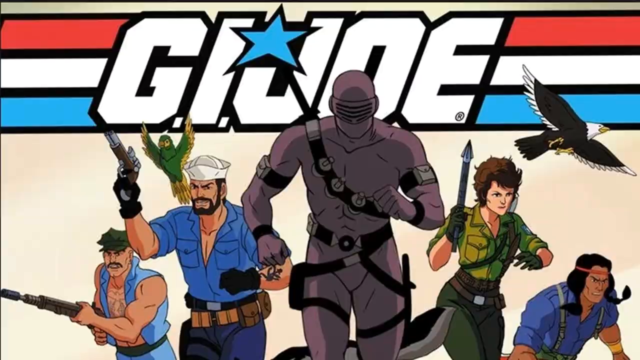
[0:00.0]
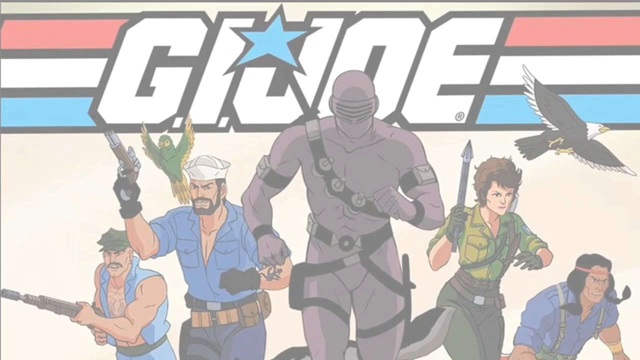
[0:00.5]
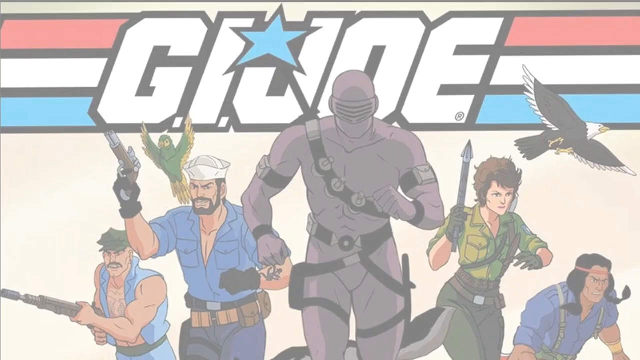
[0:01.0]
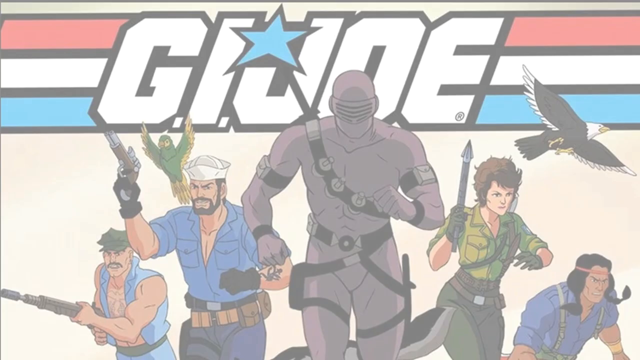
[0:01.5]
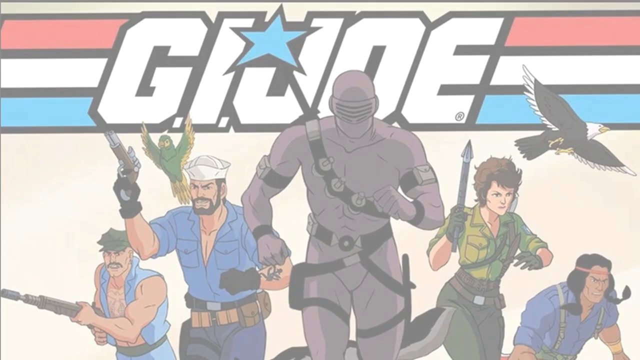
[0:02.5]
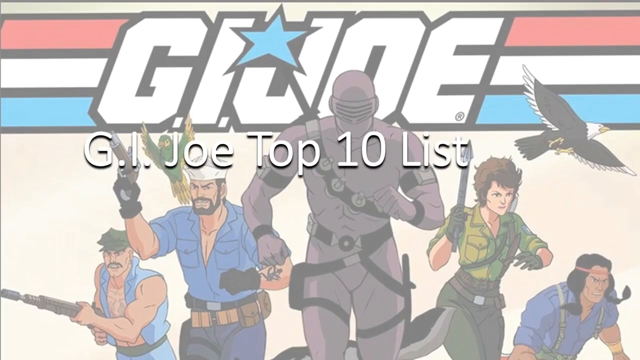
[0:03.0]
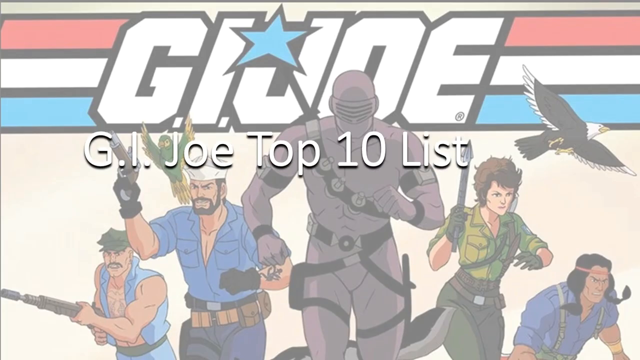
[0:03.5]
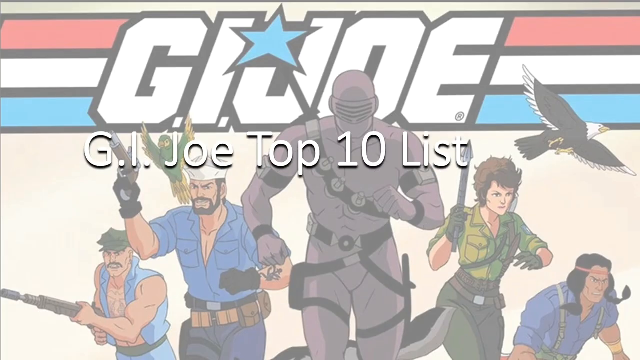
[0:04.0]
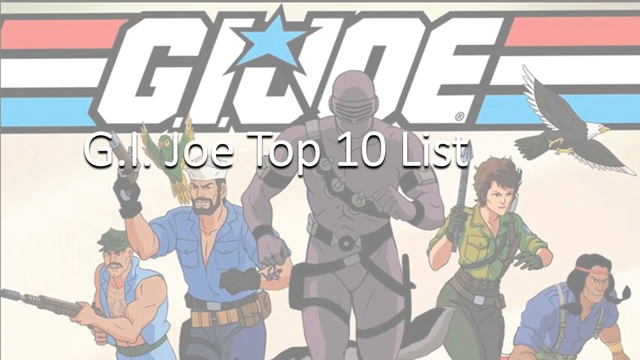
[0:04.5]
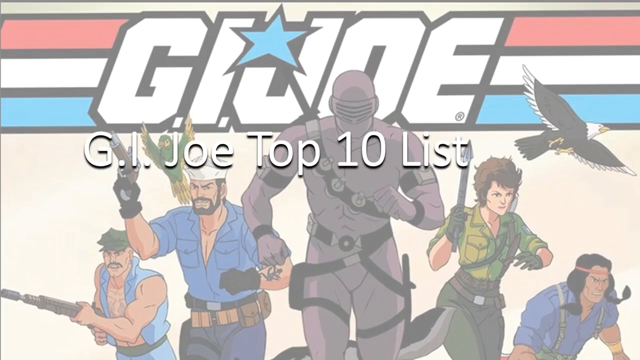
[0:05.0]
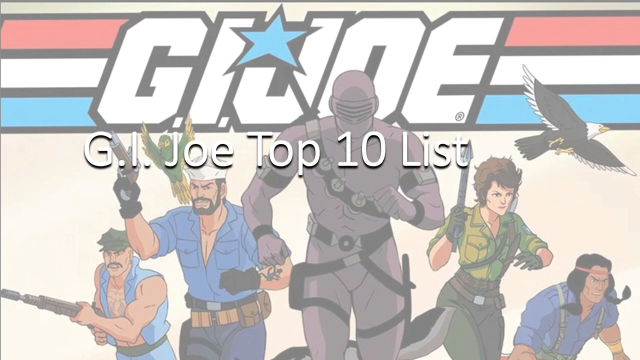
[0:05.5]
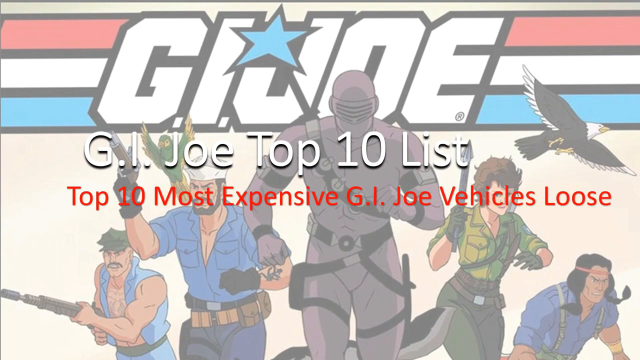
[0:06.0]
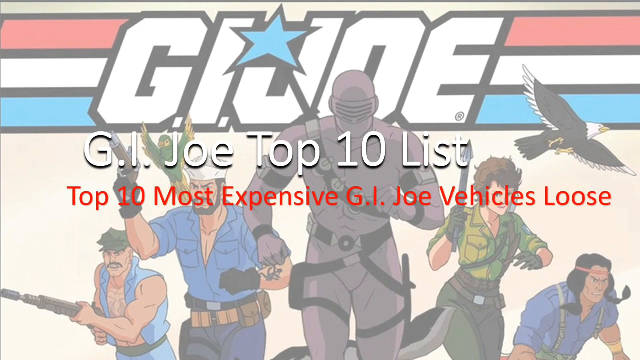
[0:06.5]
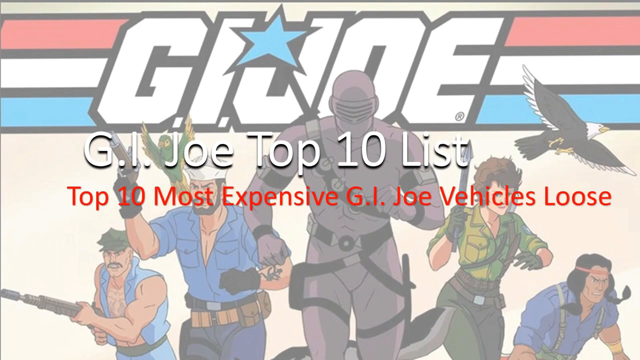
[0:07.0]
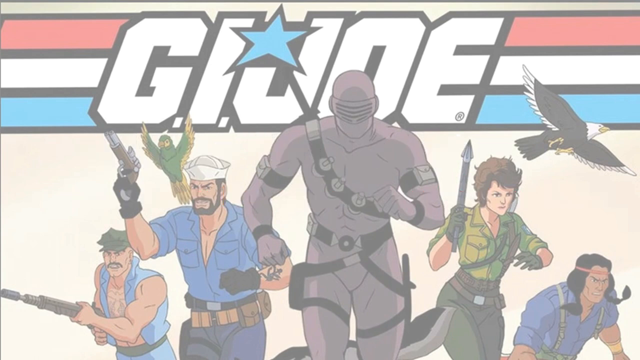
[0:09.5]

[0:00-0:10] In the background are the words G.I. Joe in a specific font. Between the I and the J there is a blue star with a black outline. A red line with a black outline runs across the top of the frame, with a white line with a black outline below it, and below that a light blue line with a black outline. In front of and below the light blue line is an illustration of a hawk flying toward the right side of the screen. Below the G and the I there is a green and yellow parrot. Five people are also visible: the center figure wears a suit that covers his body so that not an inch of skin shows; there are three more men, one of them seemingly Native American; two of the people have guns in their hands; and one woman in a green shirt holds some kind of harpoon or something similar, standing in a pose. A white transparent font then appears over the whole screen, and a title about the G.I. Joe top 10 list of the most expensive loose vehicles appears in red letters, followed by some rules.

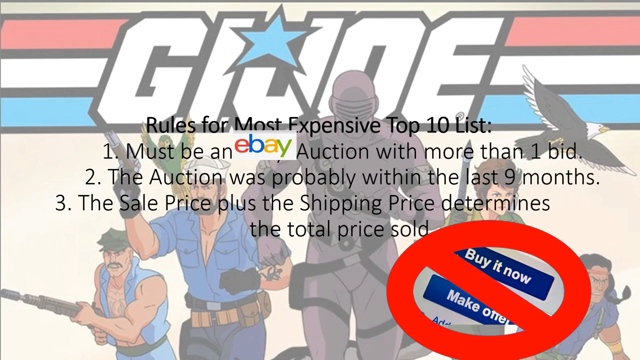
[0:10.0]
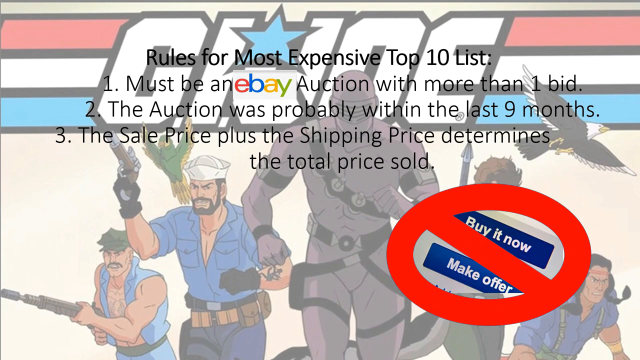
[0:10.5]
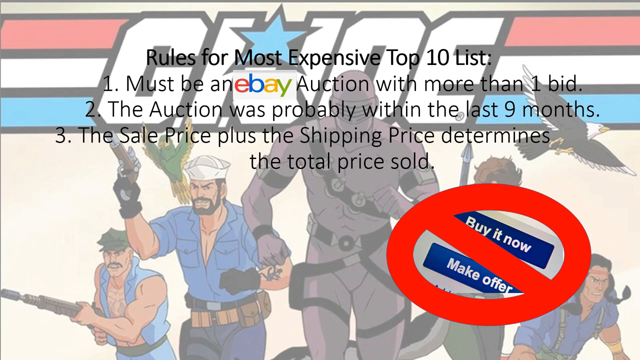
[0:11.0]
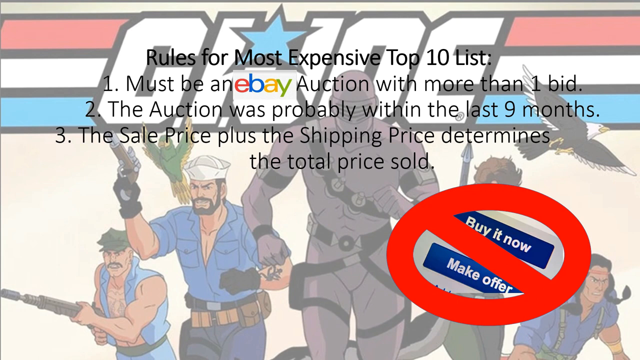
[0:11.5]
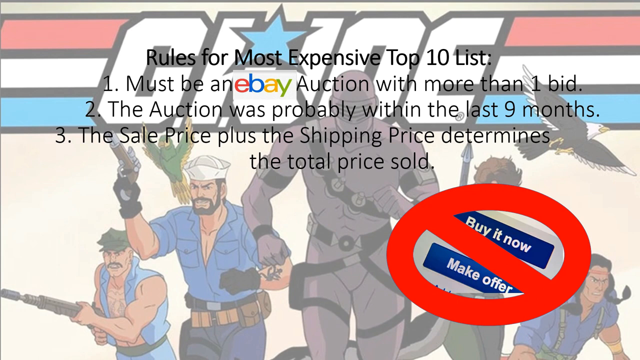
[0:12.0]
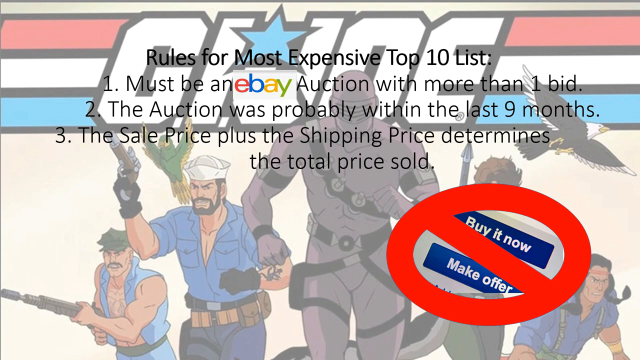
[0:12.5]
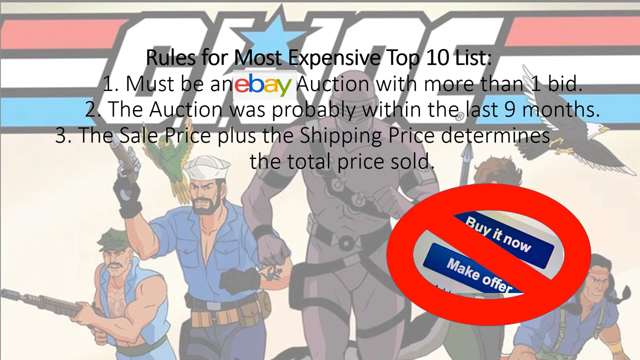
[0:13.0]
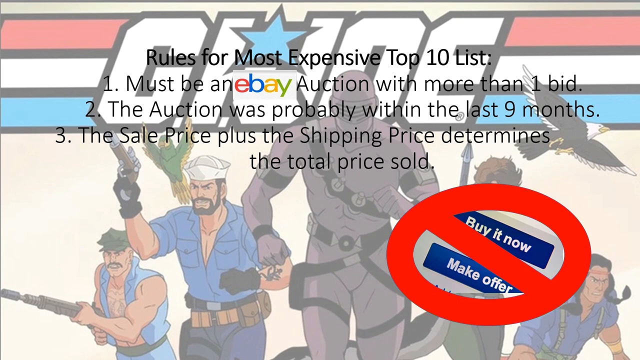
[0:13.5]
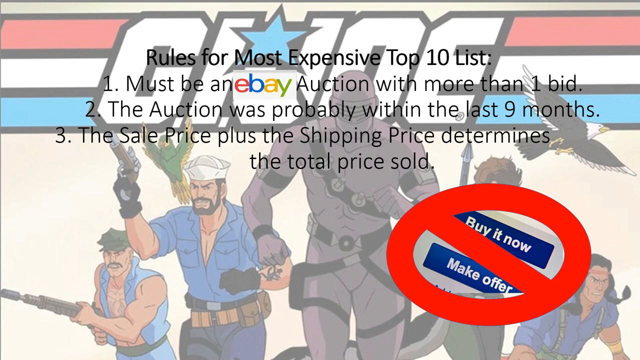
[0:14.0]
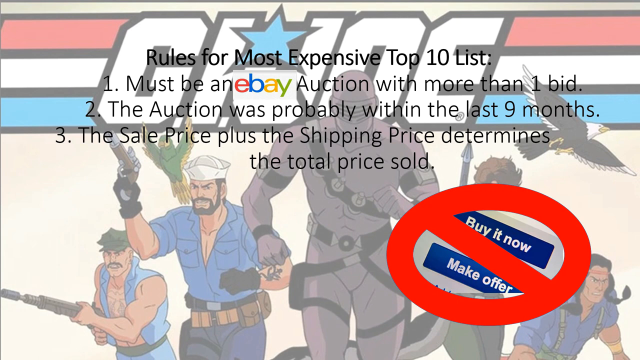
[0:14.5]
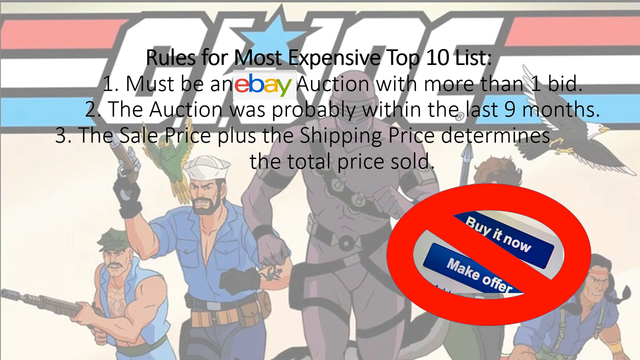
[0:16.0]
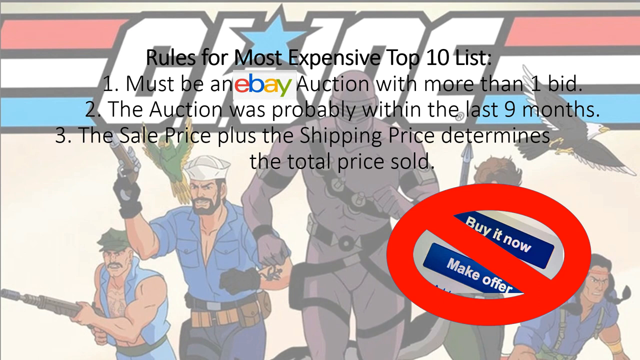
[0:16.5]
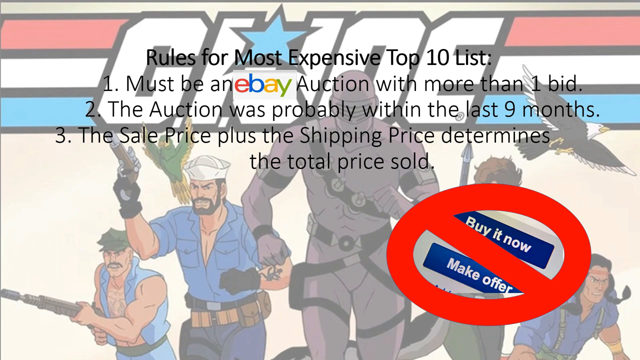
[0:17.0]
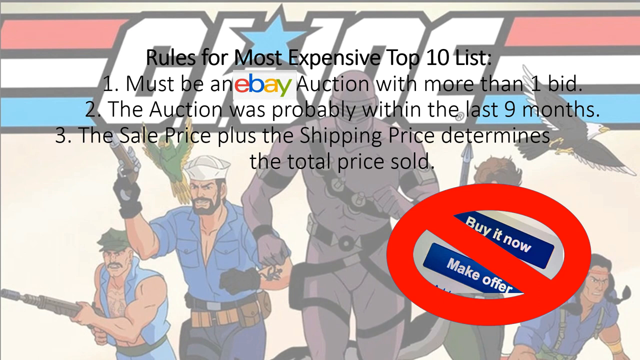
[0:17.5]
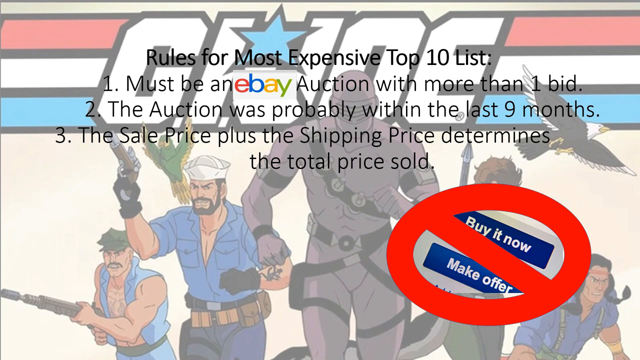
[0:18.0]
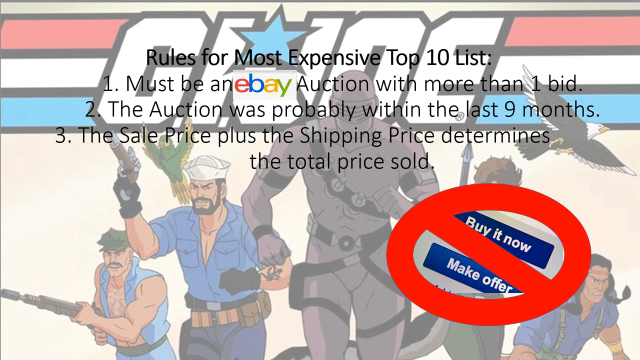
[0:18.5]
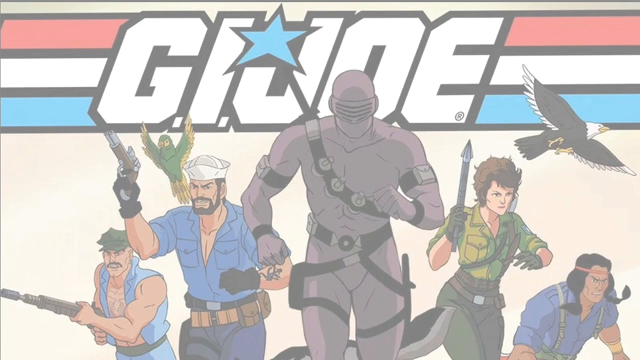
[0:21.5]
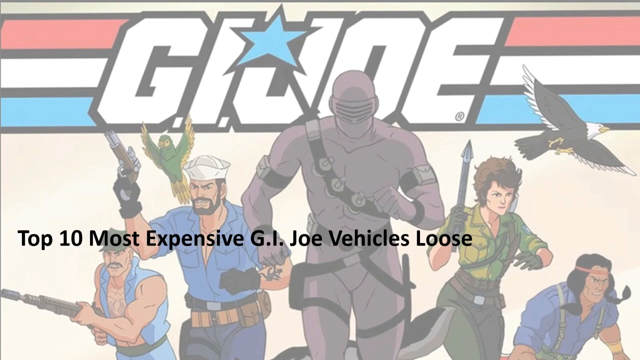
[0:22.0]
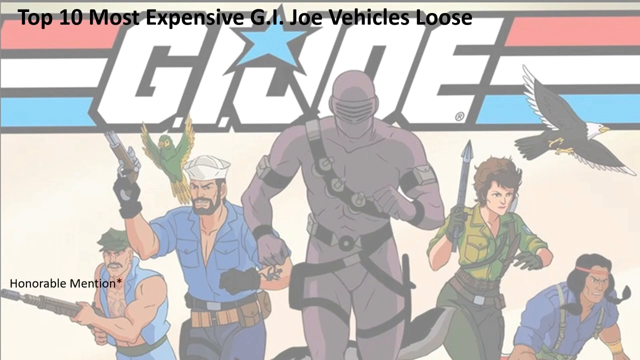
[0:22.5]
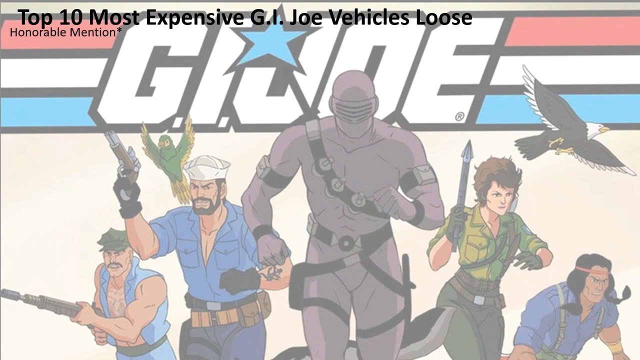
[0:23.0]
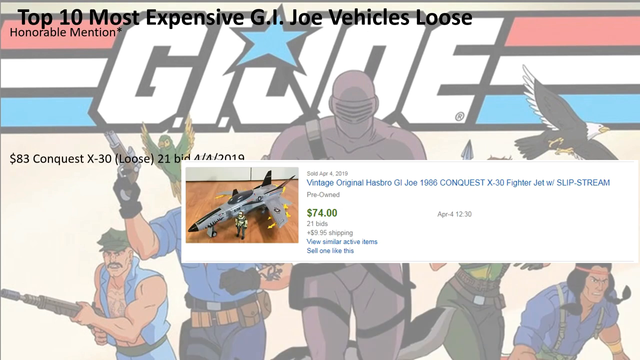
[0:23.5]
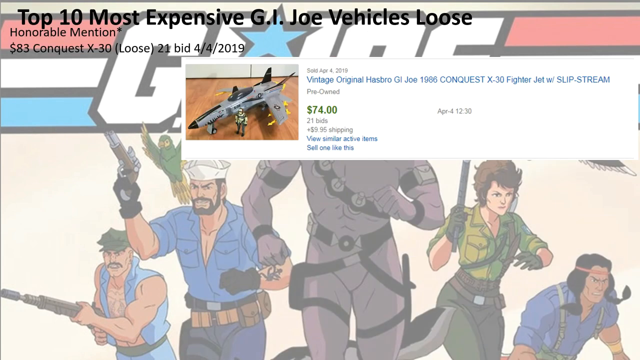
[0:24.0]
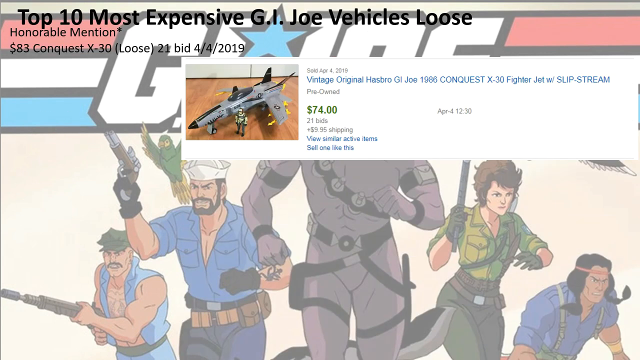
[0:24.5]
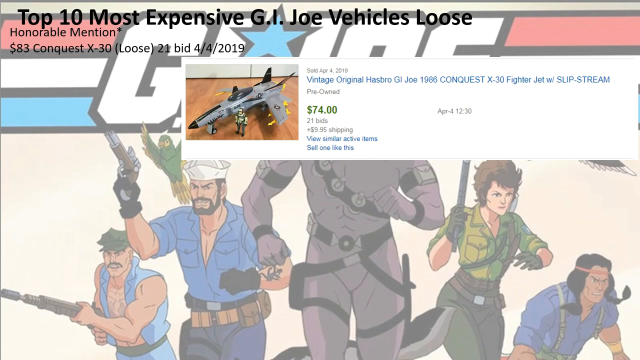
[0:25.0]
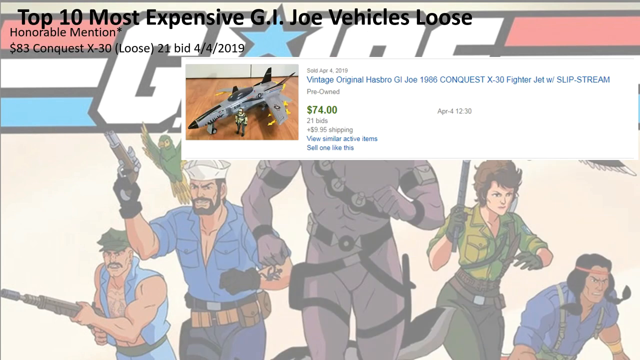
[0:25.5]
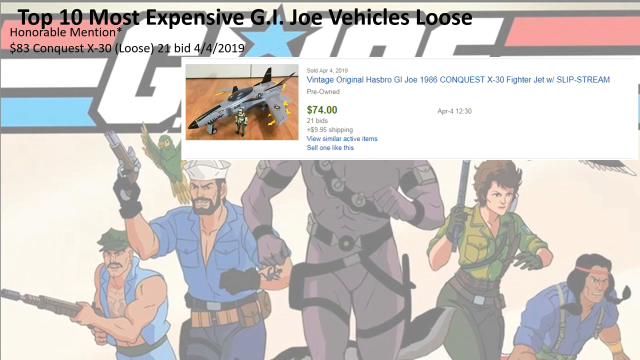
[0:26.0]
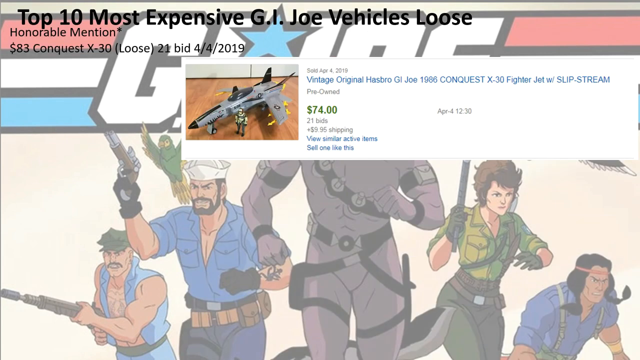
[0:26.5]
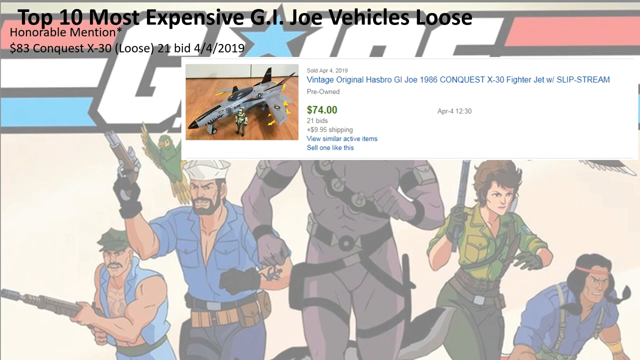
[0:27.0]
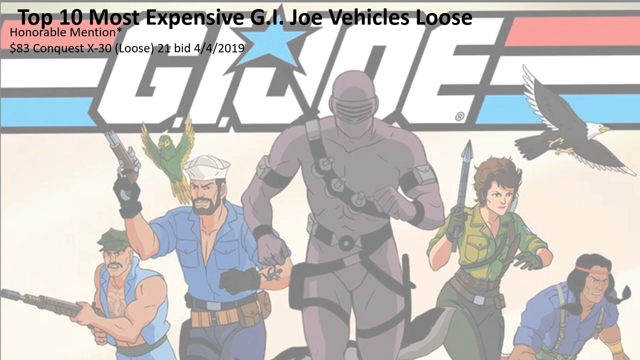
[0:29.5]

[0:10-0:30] The rules for the most expensive list are shown: the items must have been on an eBay auction with more than one bid; the auction was apparently within the last nine months; and the sale price plus the shipping price determines the total price. In the right corner below the text, an icon prohibits buy now and make an offer. The text stays on screen for a while. Then a heading about the most expensive G.I. Joe vehicles, loose, appears at the top of the screen in black, bold font, with a small line of text right below it that ends in an asterisk. An $83 eBay listing for a Conquest from 2019 is shown. It is marked pre-owned, and the full eBay listing is visible, including the date, some details about similar active items, and the price of $74 plus $10 for shipping.